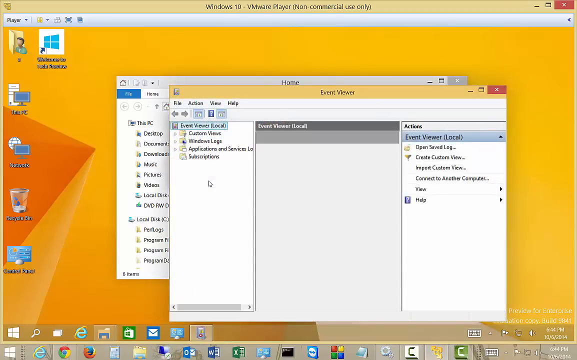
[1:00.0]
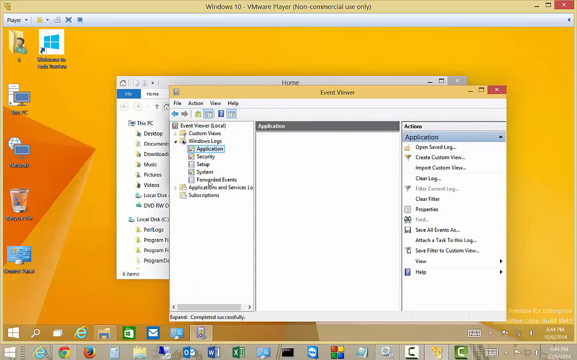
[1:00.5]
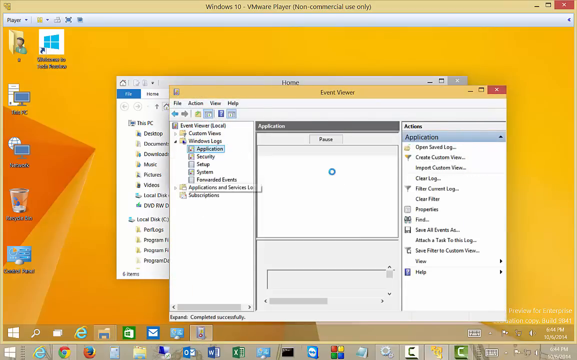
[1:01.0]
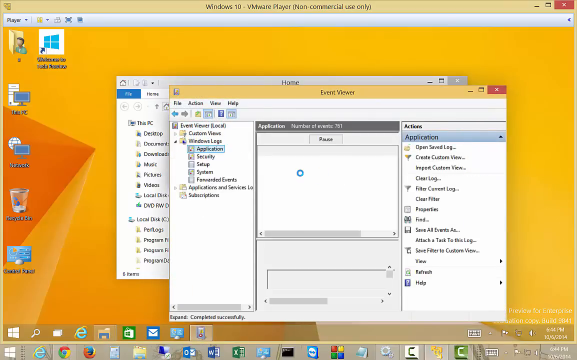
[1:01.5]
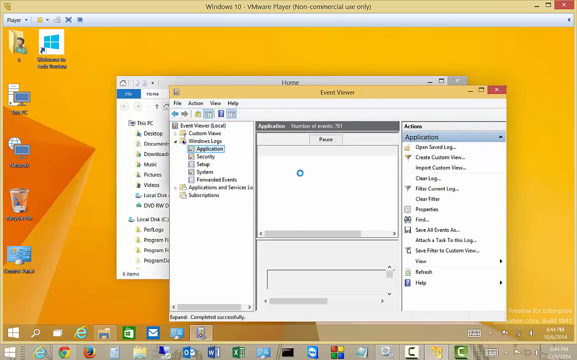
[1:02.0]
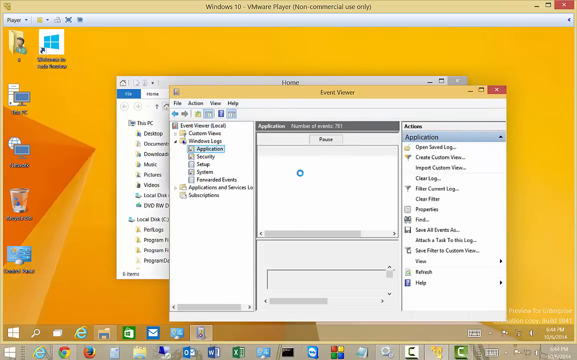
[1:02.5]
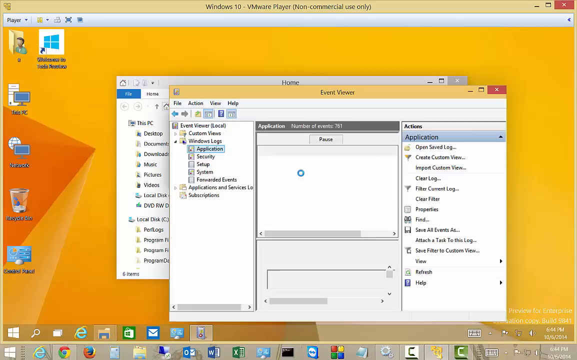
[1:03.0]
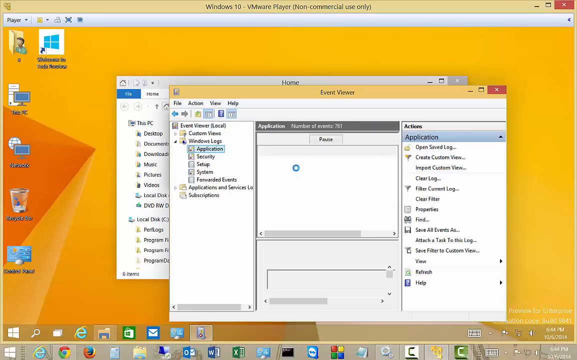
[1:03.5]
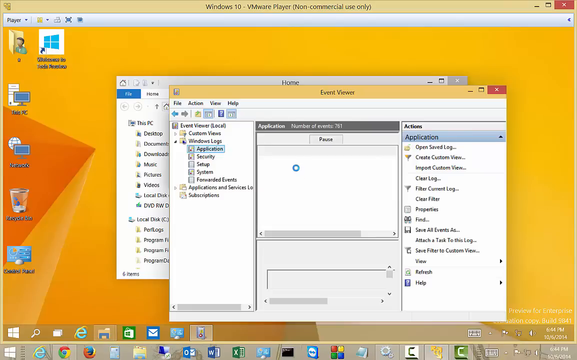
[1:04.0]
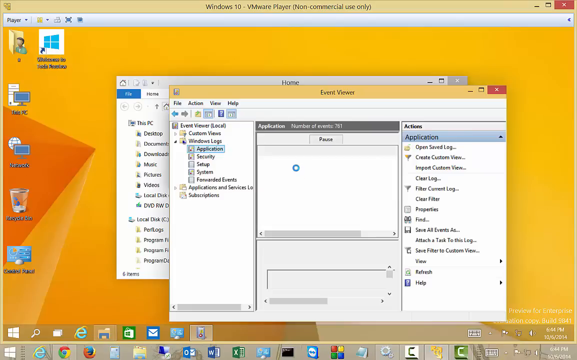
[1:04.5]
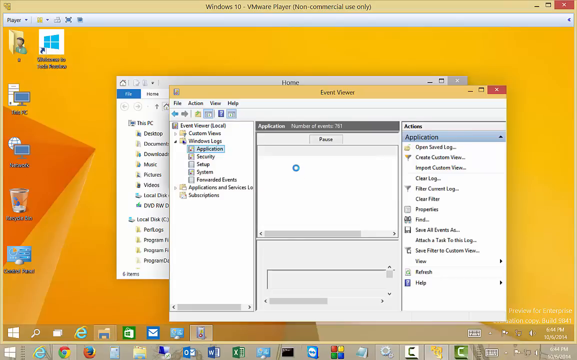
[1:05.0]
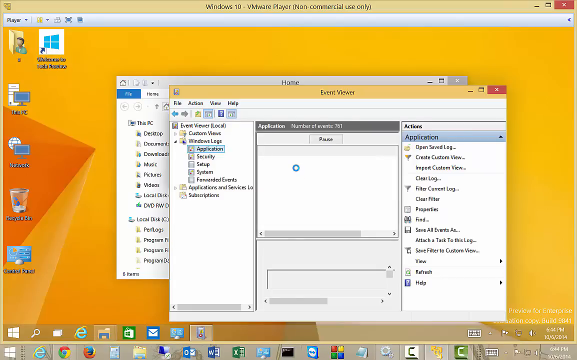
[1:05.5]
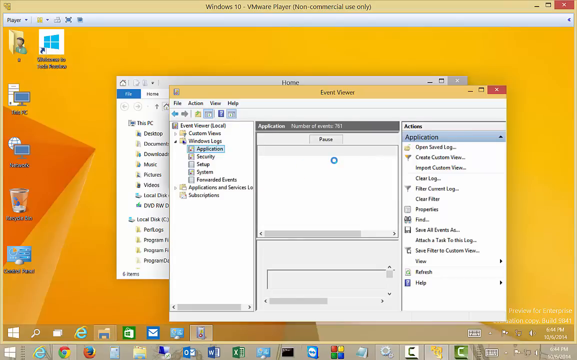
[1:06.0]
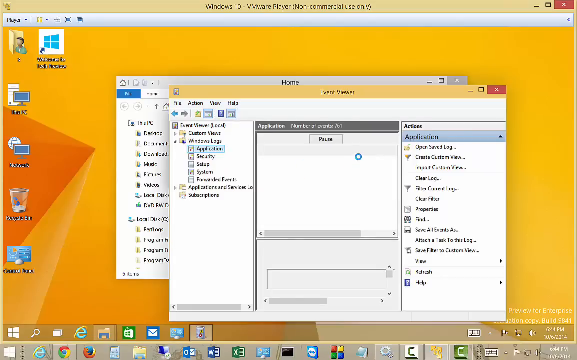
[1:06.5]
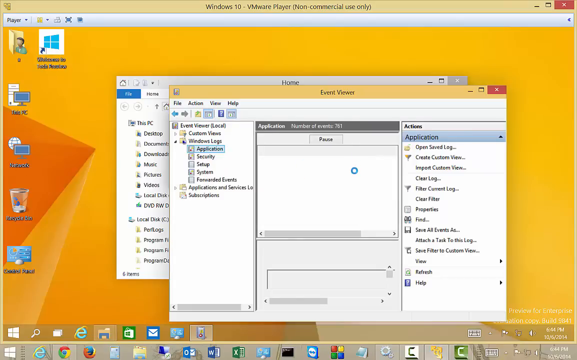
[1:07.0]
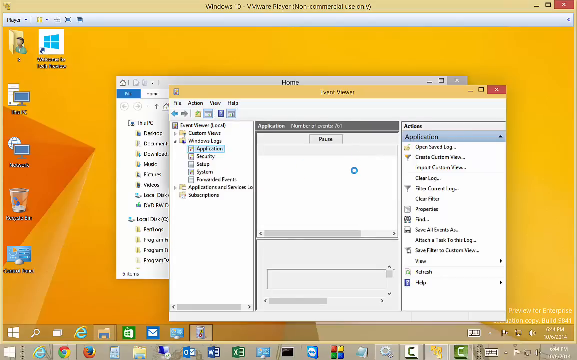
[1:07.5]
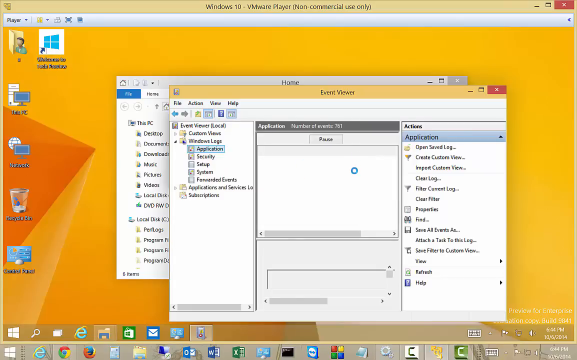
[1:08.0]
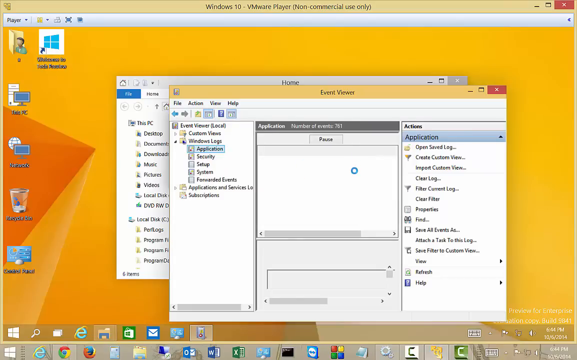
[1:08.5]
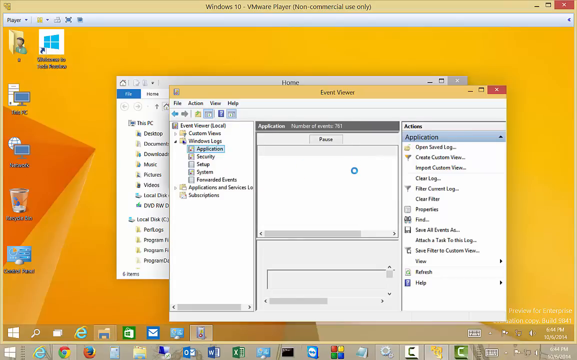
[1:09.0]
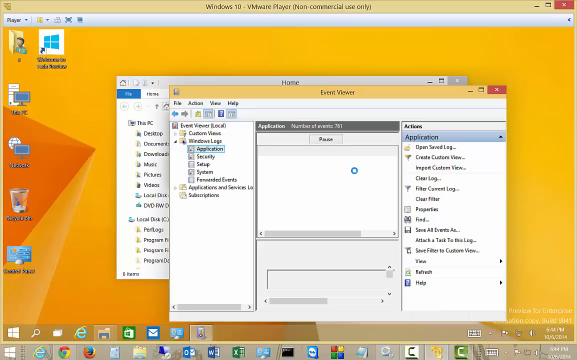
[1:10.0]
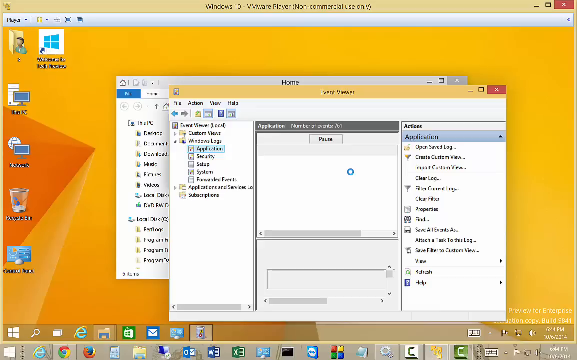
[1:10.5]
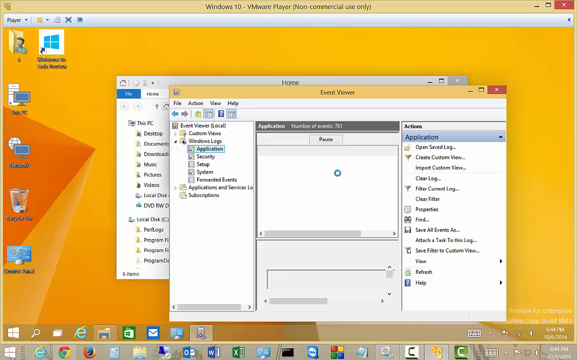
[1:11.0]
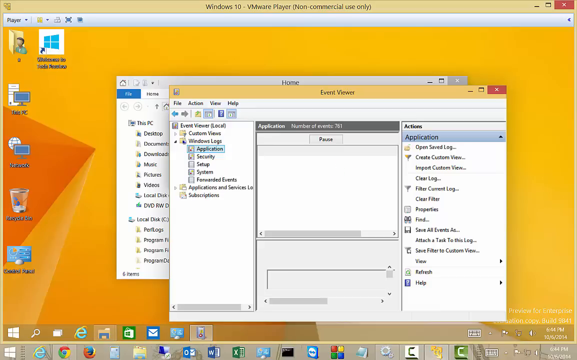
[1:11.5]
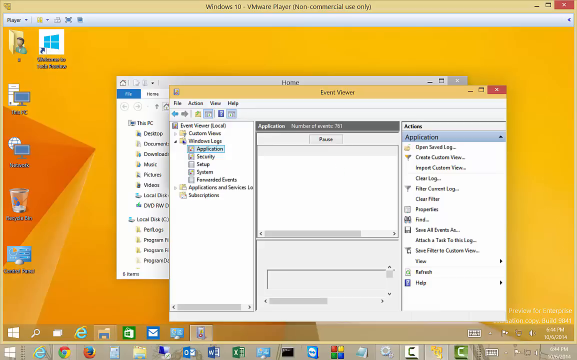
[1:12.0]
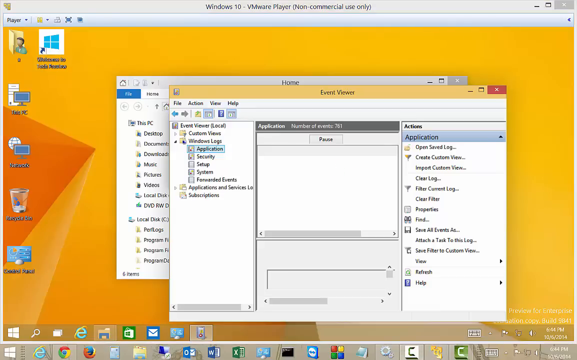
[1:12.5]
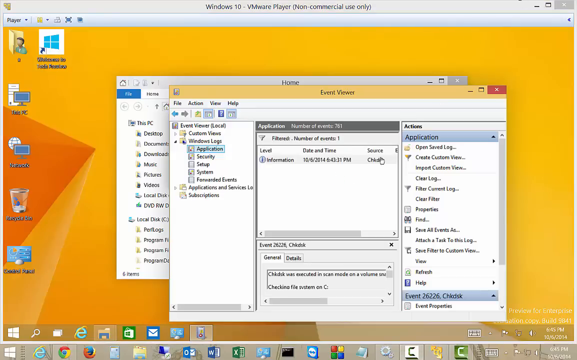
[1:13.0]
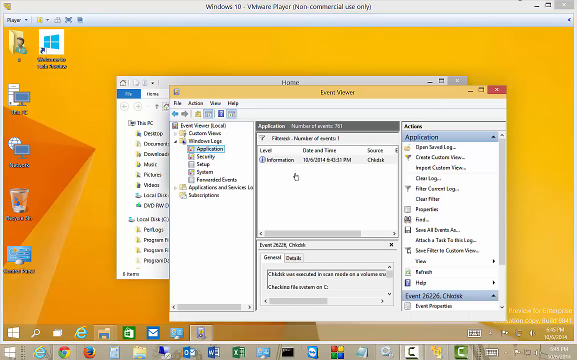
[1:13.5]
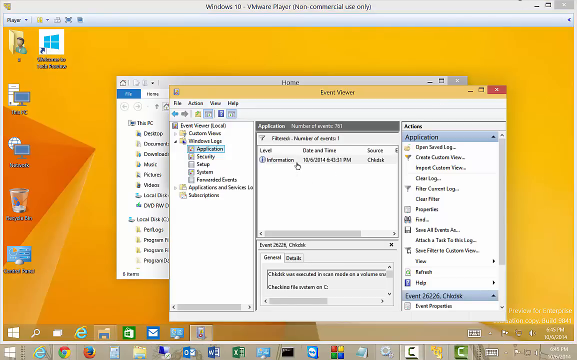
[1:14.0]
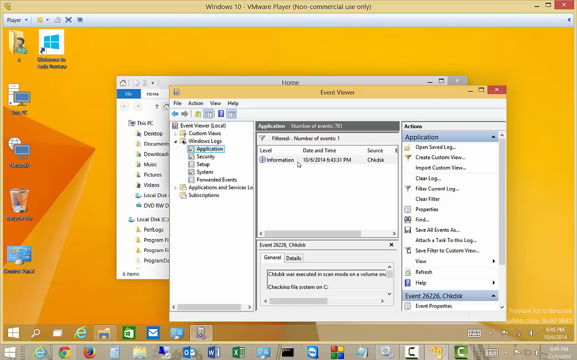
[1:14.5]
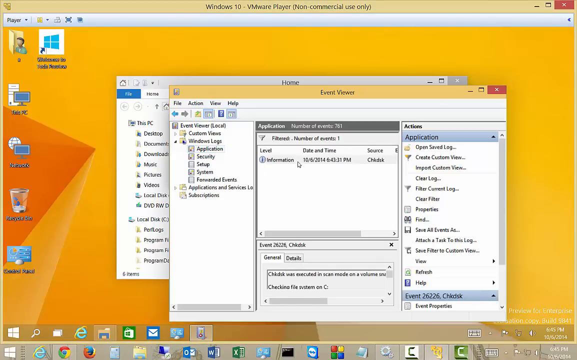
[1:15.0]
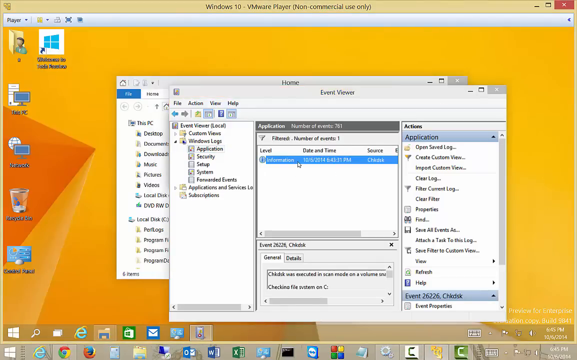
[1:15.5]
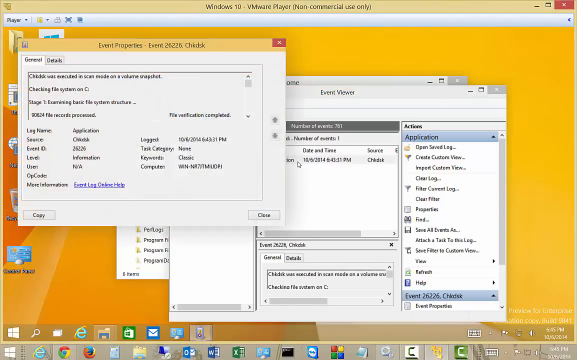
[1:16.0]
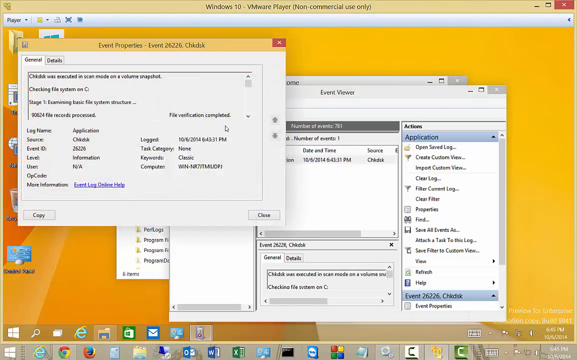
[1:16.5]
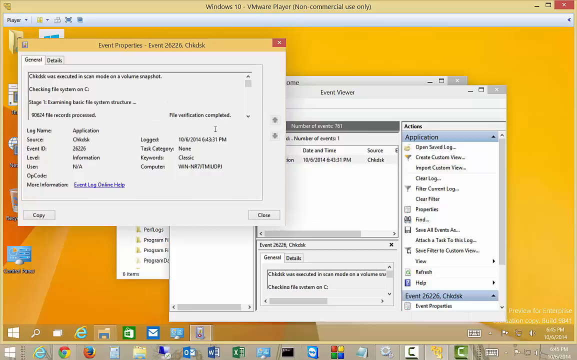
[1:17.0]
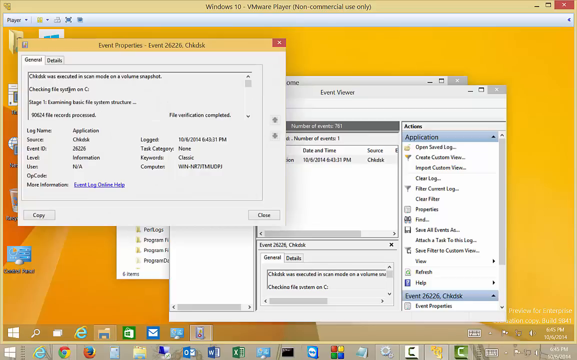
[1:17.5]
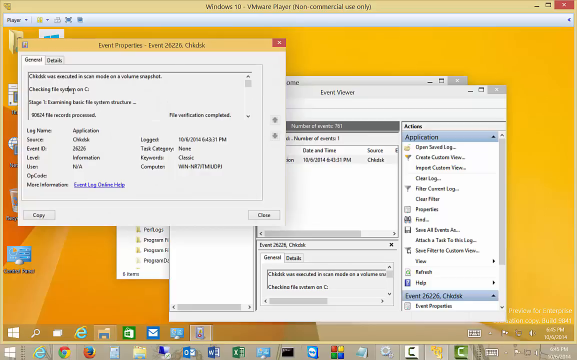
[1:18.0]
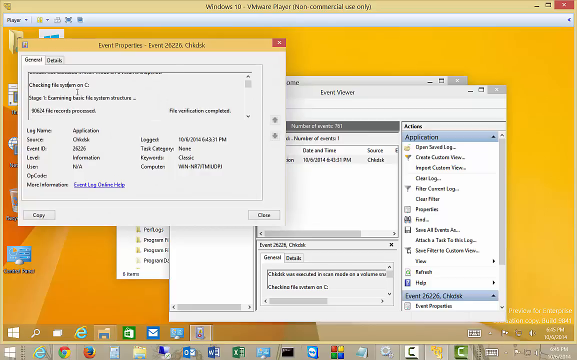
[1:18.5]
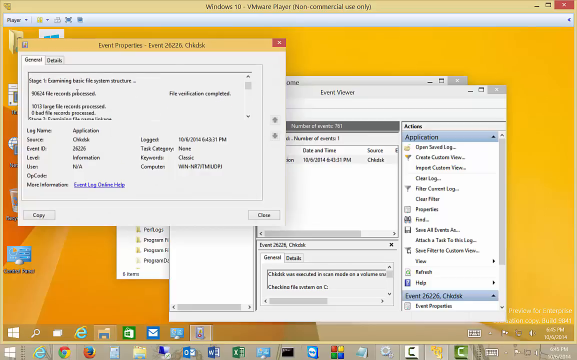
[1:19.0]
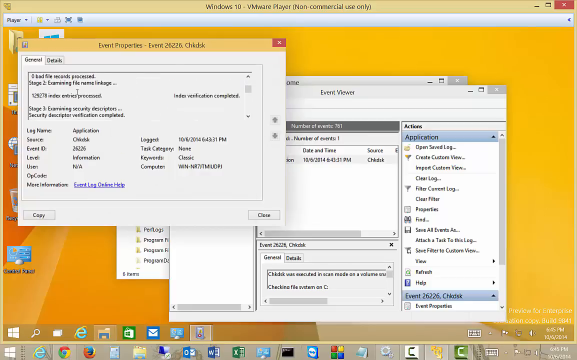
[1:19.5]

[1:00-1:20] A yellow background appears, apparently the desktop of a Windows computer, with "Windows 10" and "VMware player" on top and a few icons at the bottom. On the left are six icons, among them "your PC" and the Recycle Bin. In the middle, two windows are open, one on top of the other. The one in the foreground says "Event Viewer" and has three columns: the left column says "Event Viewer," followed by "Custom Views," "Windows Logs," "Application," "Security," "Setup," "System" and others; the middle says "Applications"; and the right says "Application," "Open," "Save," "Log," "Create Custom View," "Import Custom View," "Clear Log," "Filter Current Log," "Clear Filter" and more. The mouse shows the loading circle, then a file is shown and opened.